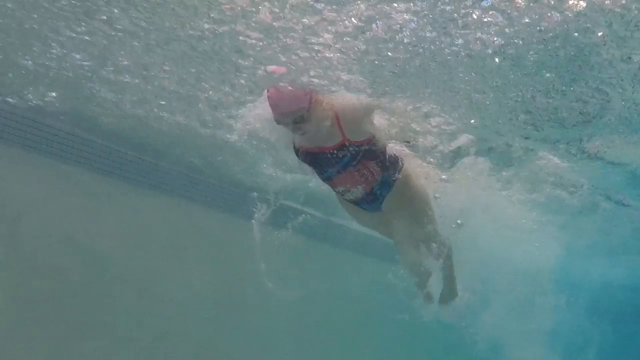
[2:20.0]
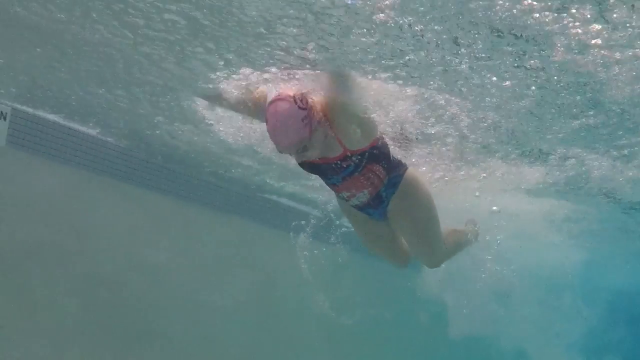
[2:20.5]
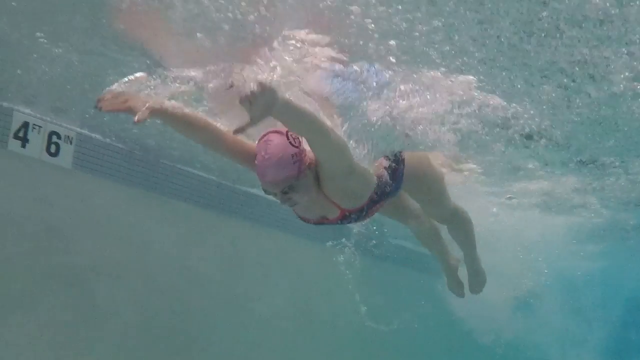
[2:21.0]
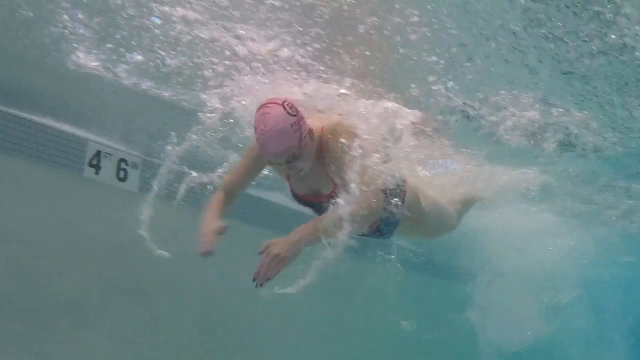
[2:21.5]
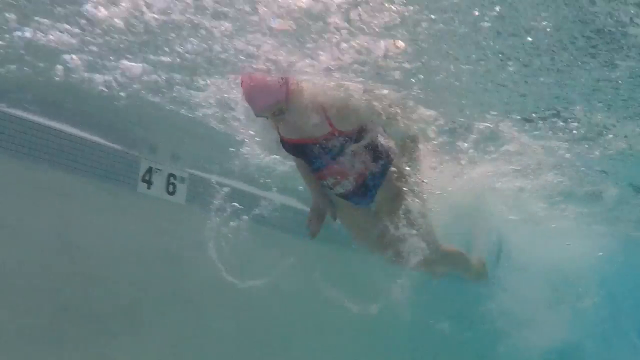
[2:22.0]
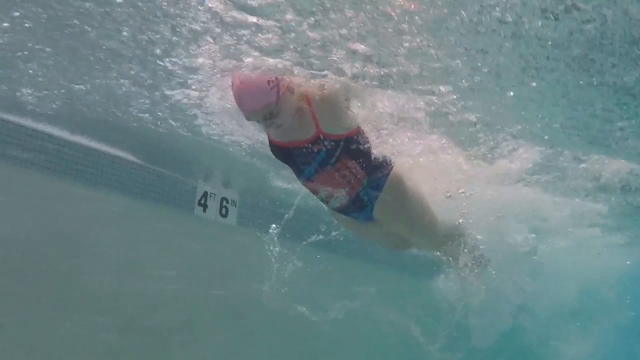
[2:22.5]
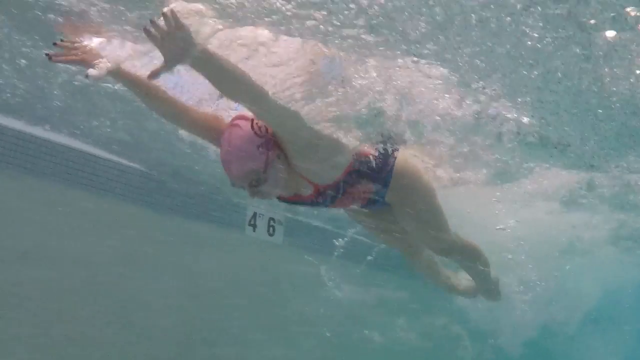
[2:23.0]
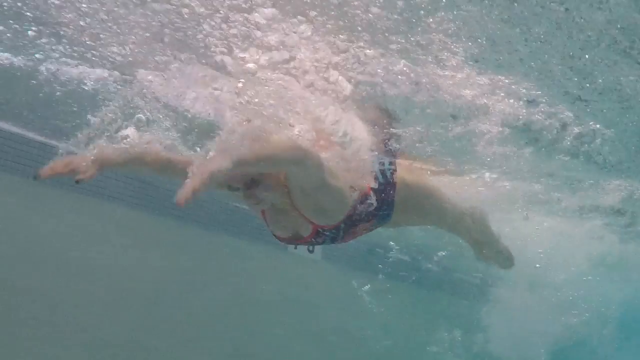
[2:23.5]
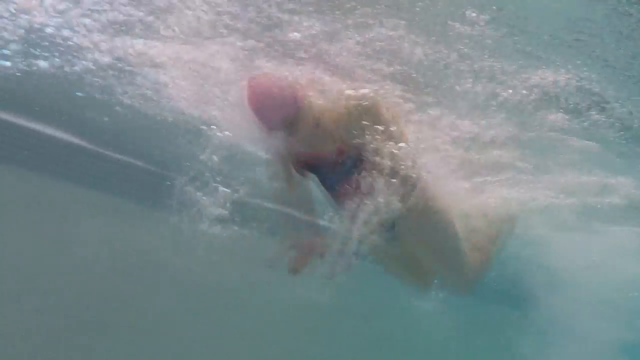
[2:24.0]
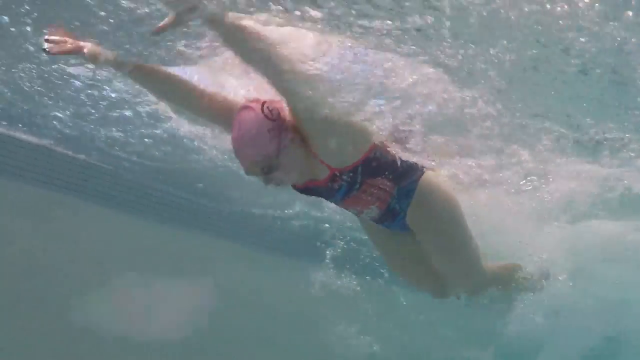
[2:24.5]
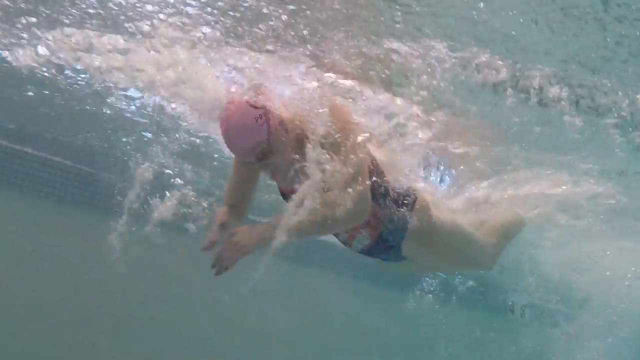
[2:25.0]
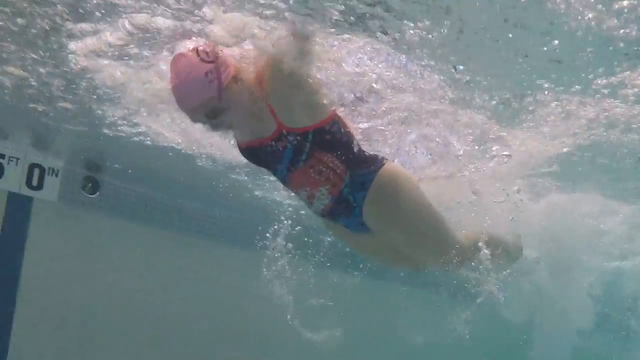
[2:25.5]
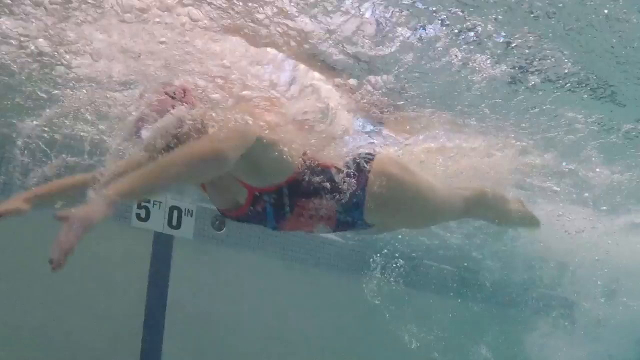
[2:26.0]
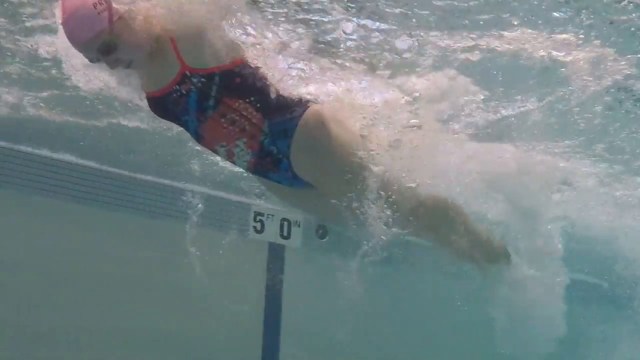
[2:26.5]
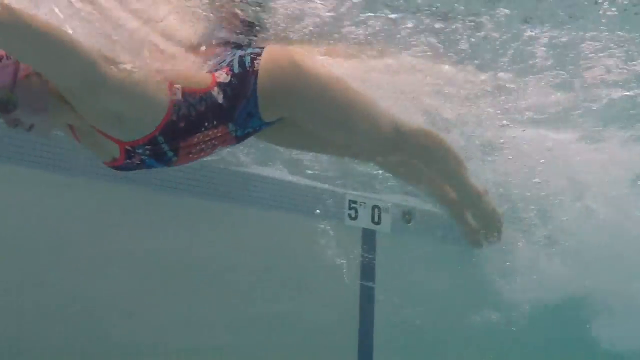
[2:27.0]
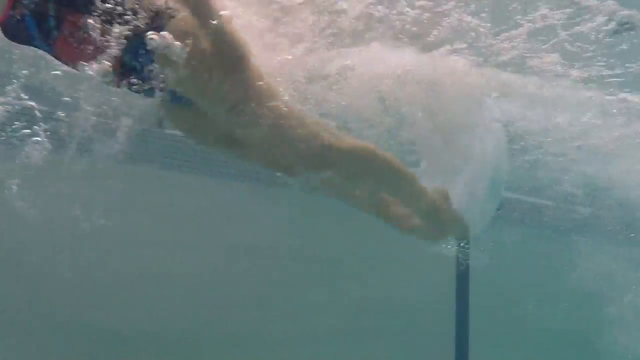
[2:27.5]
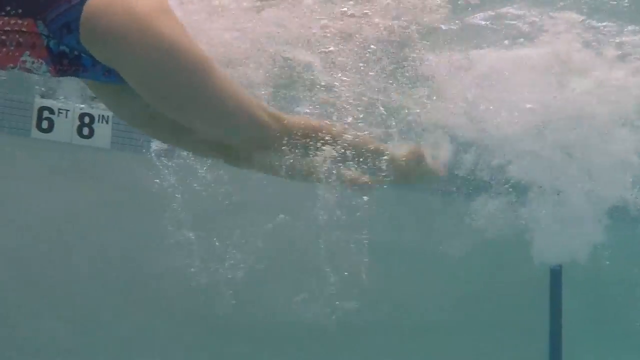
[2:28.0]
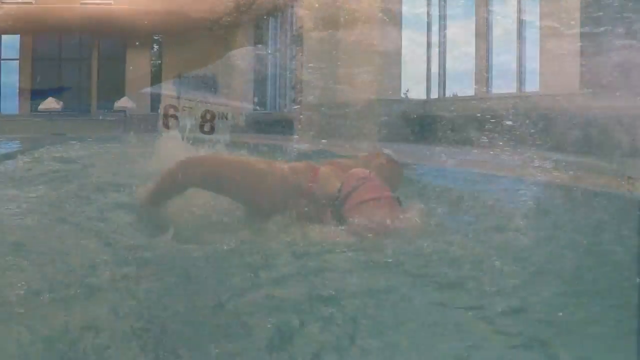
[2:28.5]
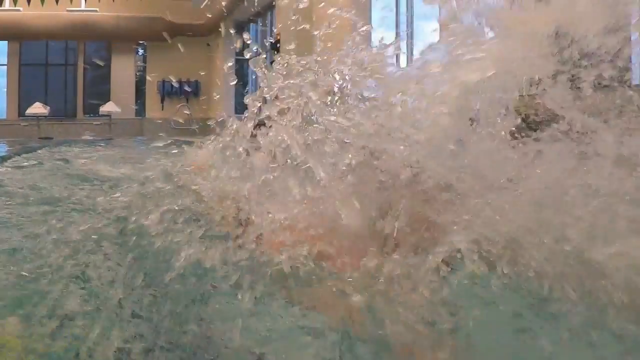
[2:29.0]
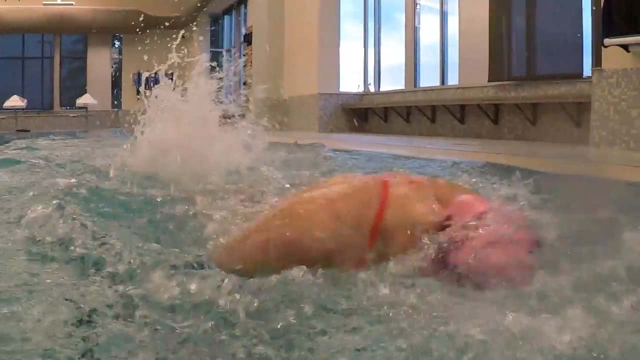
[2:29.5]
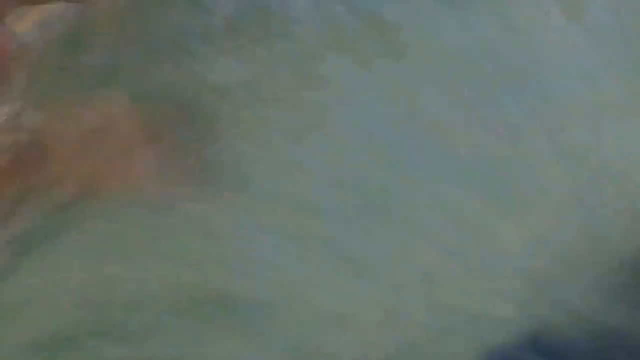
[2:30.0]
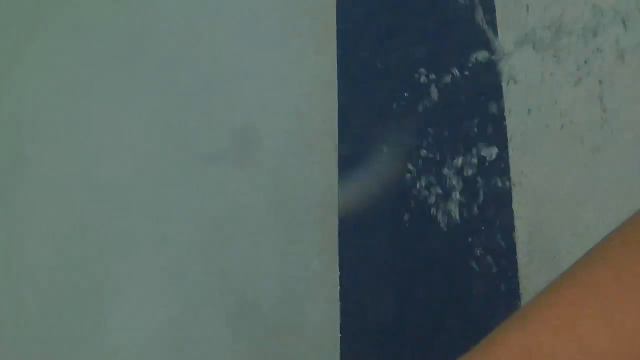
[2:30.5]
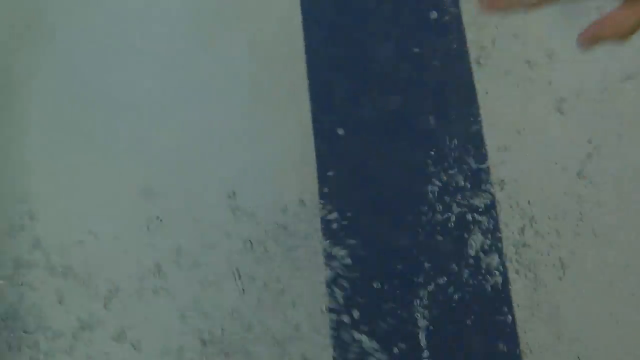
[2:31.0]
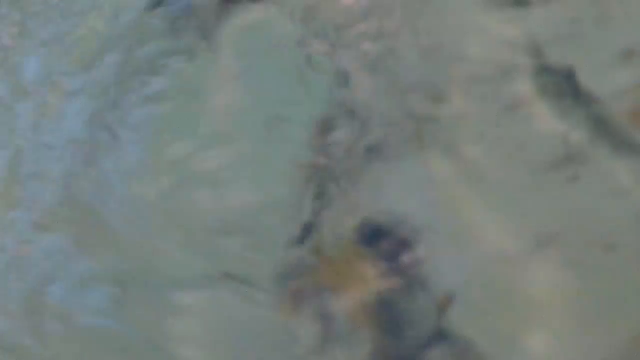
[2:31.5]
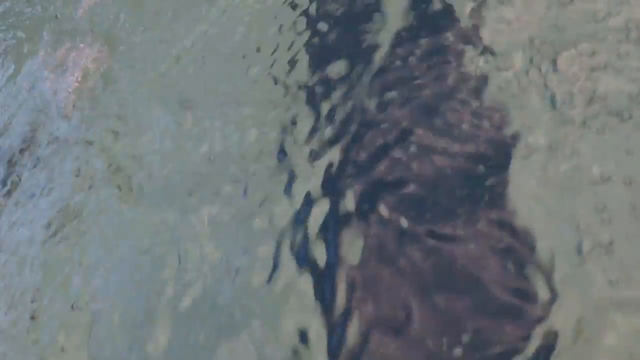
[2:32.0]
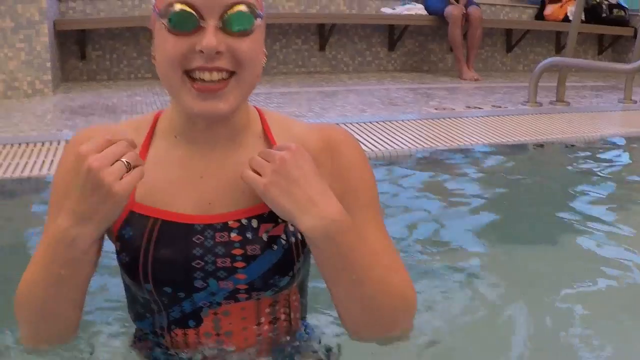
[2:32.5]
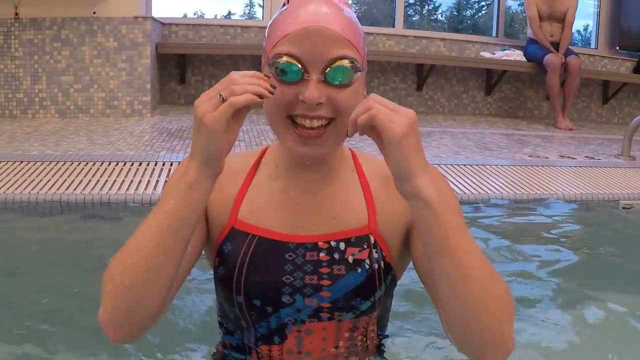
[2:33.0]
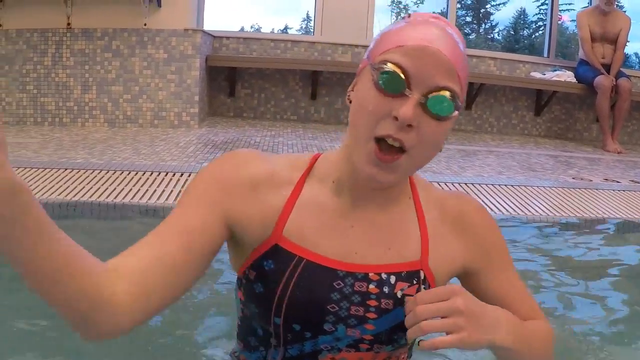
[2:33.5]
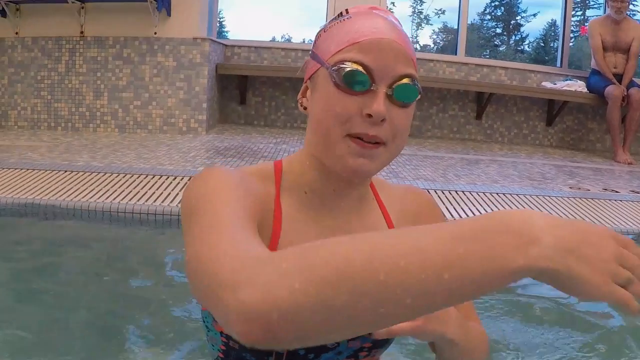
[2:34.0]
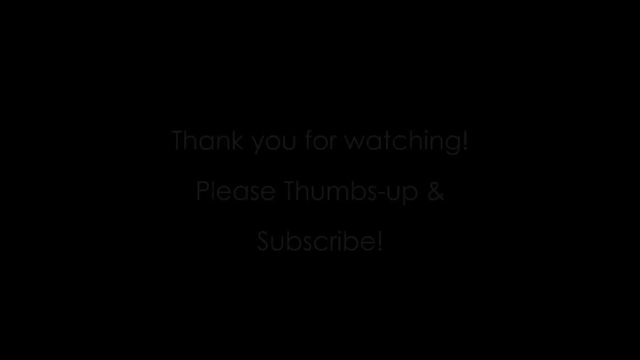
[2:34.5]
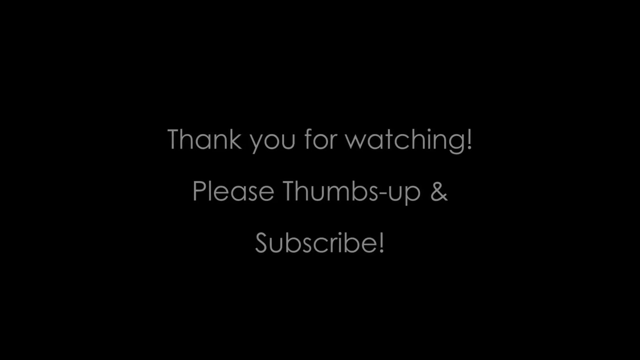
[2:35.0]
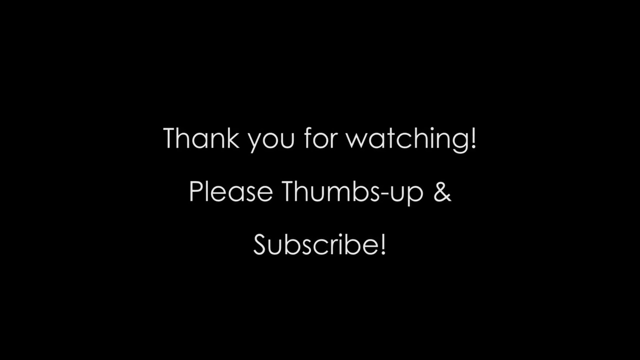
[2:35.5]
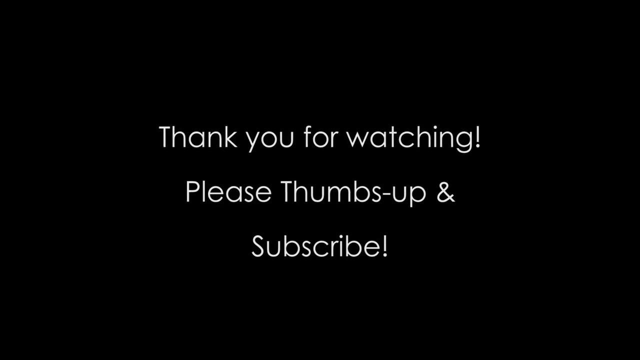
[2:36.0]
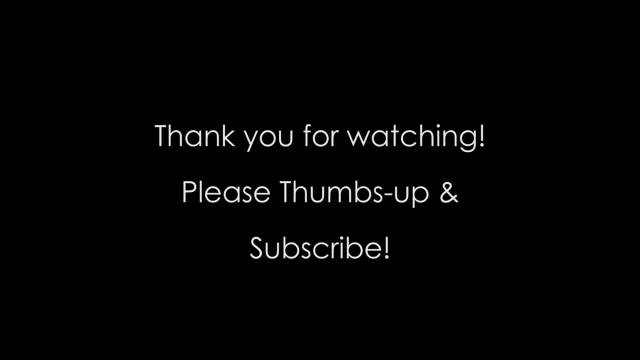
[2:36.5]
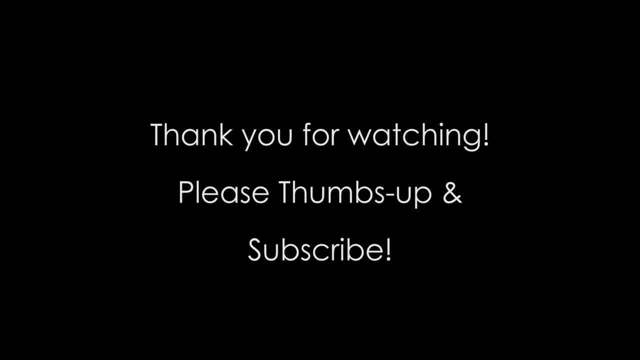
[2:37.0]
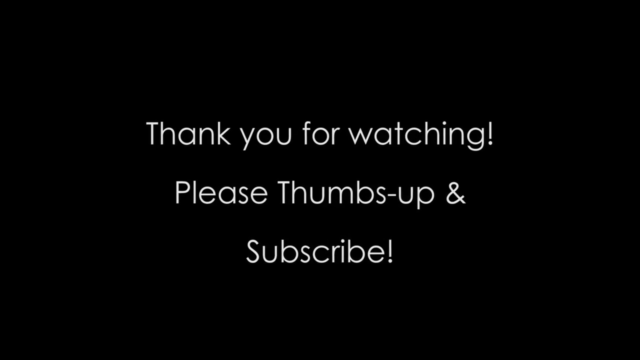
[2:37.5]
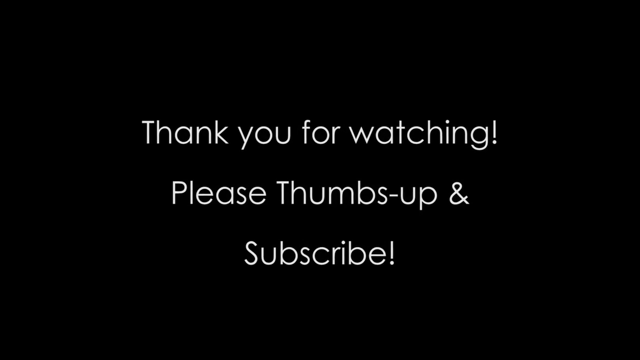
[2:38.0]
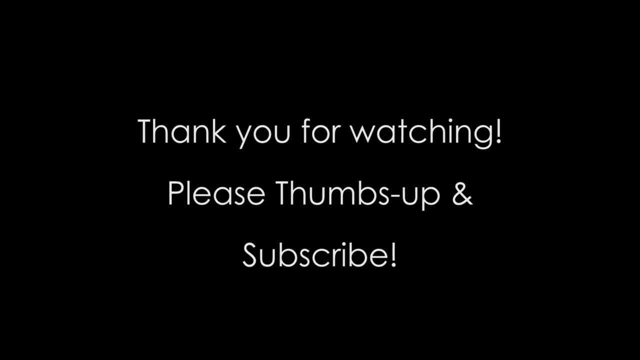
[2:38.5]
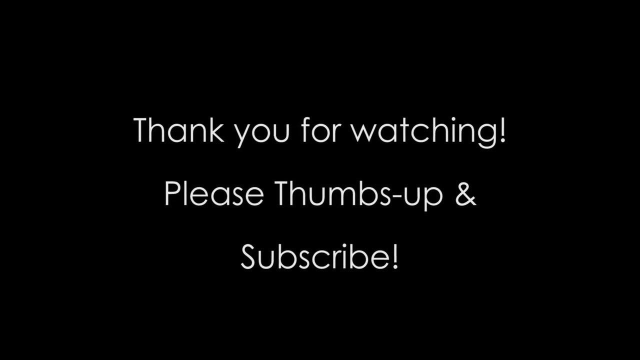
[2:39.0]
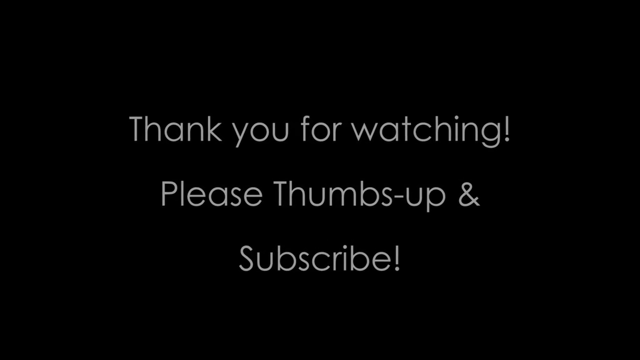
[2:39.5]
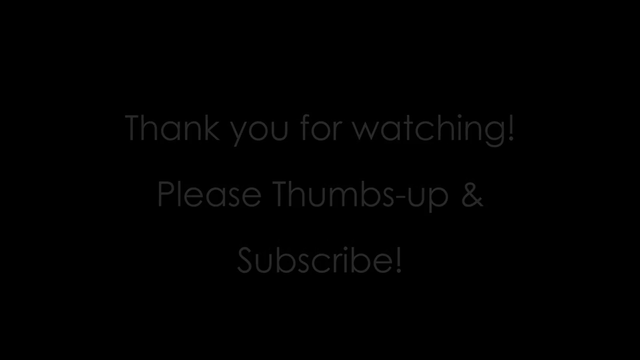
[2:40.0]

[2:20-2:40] The woman swims the butterfly in the pool, showing what to do and what not to do; she appears to do almost two kicks per arm movement. After she finishes swimming she gets out of the pool, smiles and puts her hand up. Text then reads "thank you for watching. Please thumbs up and subscribe", and the screen goes completely black.